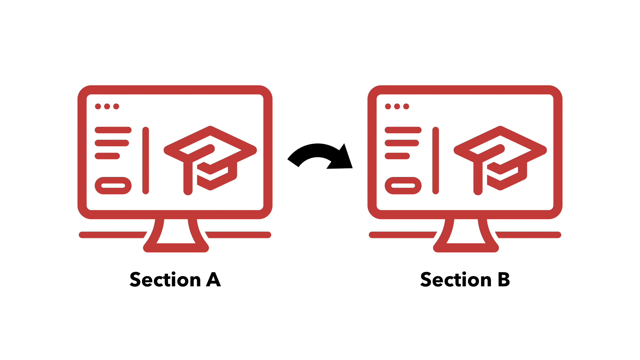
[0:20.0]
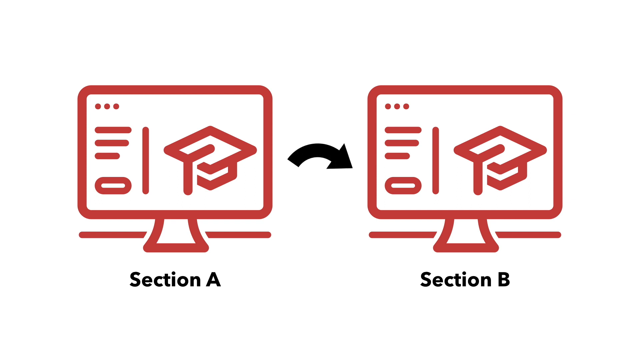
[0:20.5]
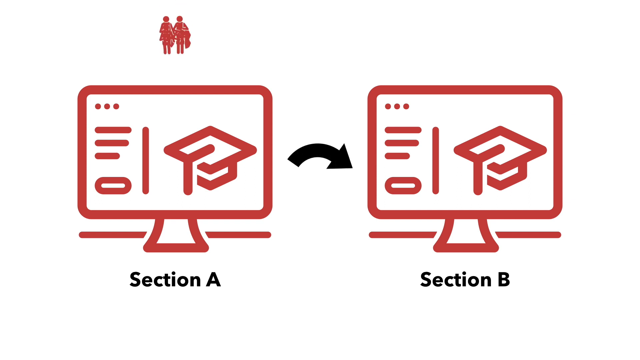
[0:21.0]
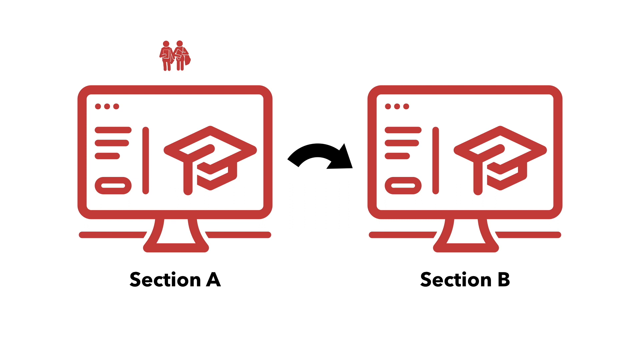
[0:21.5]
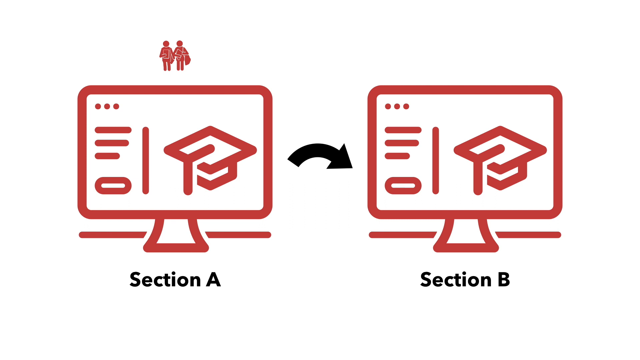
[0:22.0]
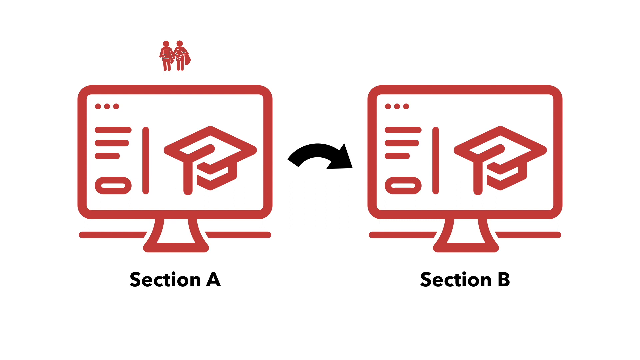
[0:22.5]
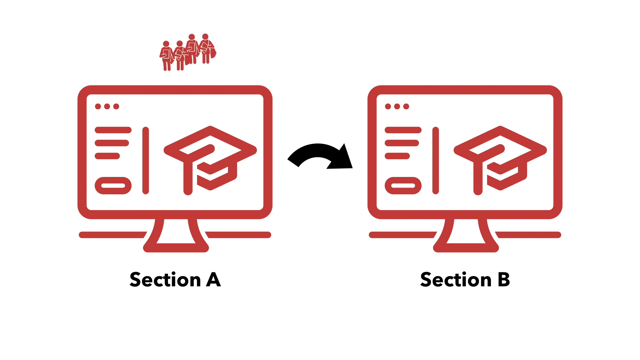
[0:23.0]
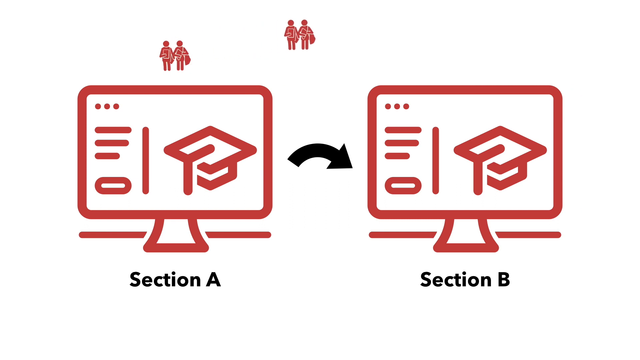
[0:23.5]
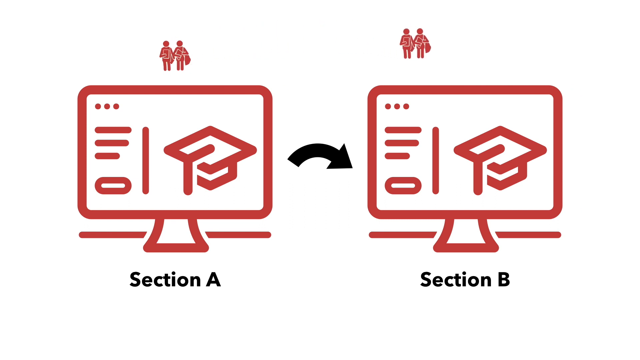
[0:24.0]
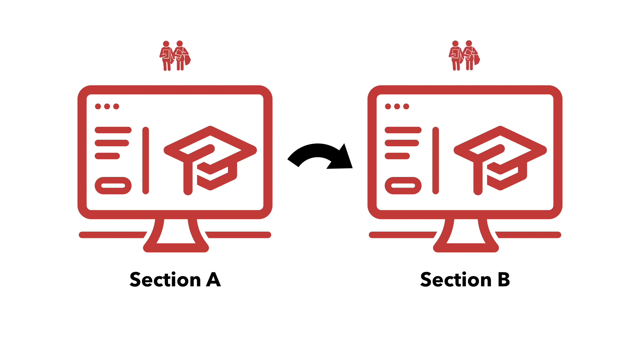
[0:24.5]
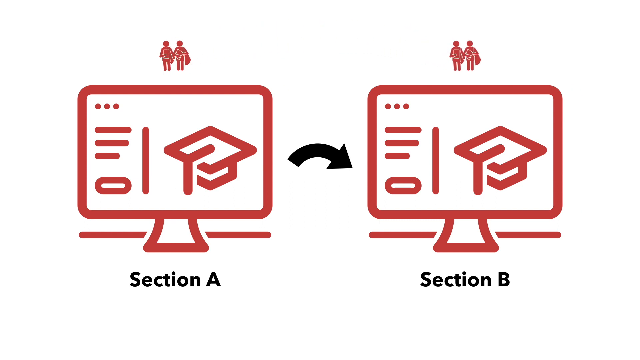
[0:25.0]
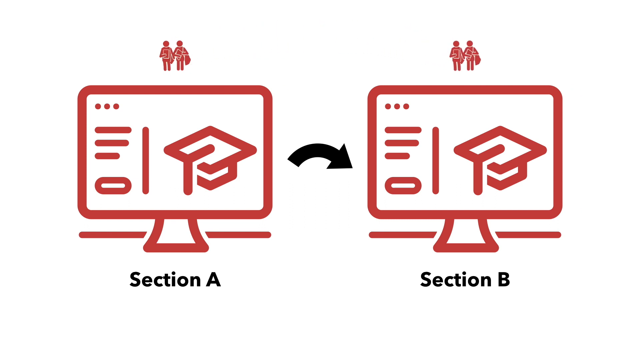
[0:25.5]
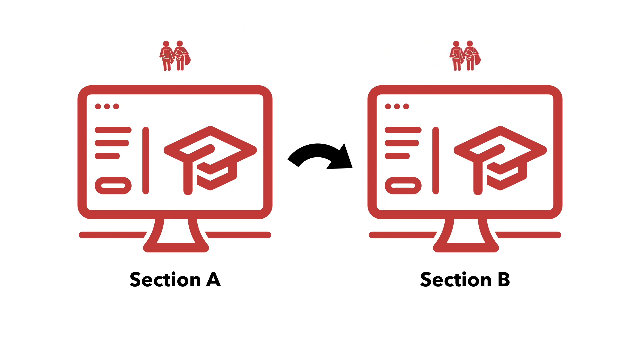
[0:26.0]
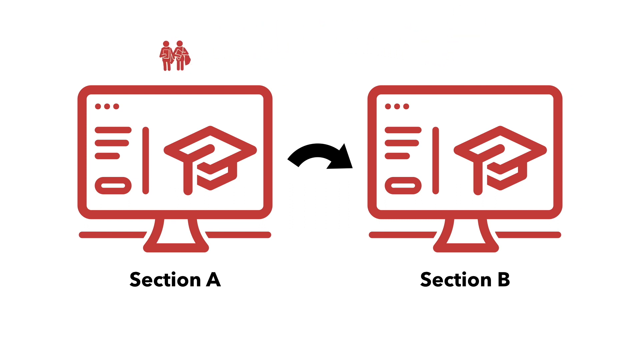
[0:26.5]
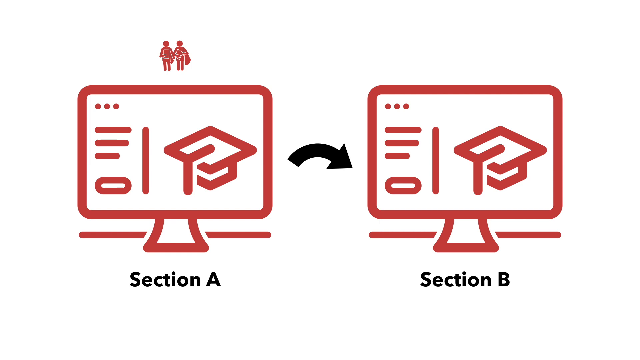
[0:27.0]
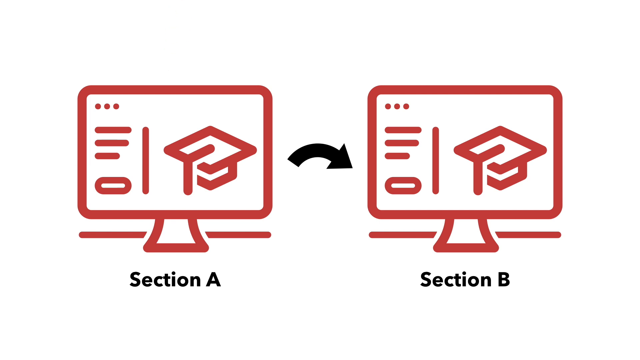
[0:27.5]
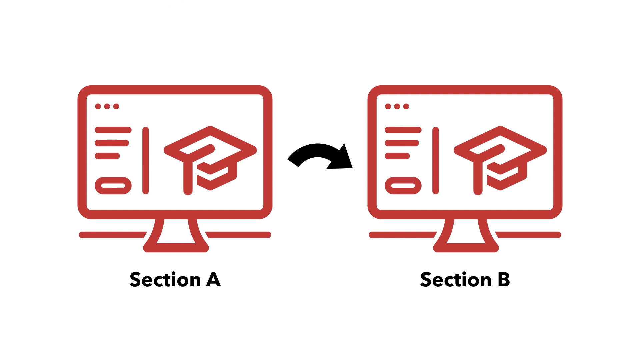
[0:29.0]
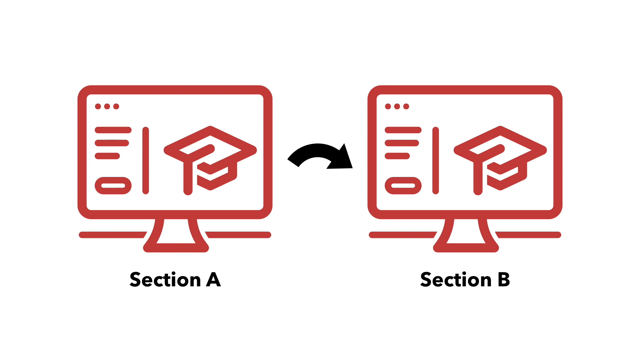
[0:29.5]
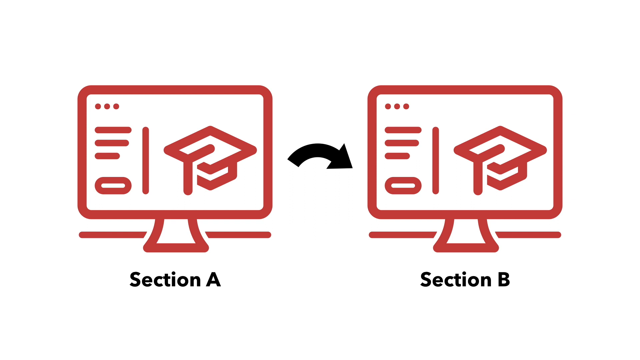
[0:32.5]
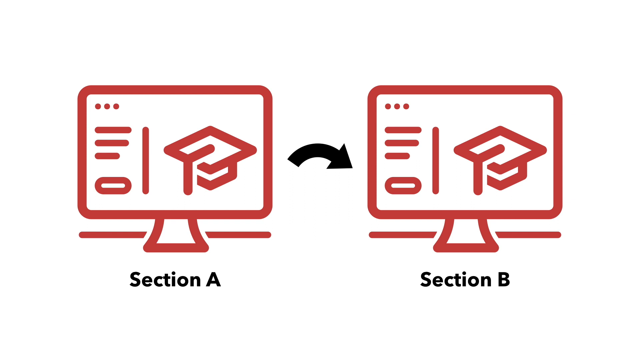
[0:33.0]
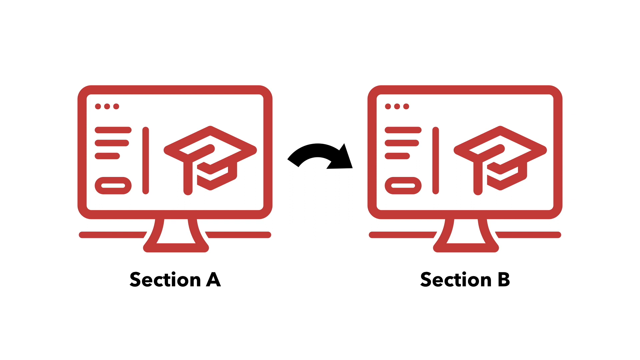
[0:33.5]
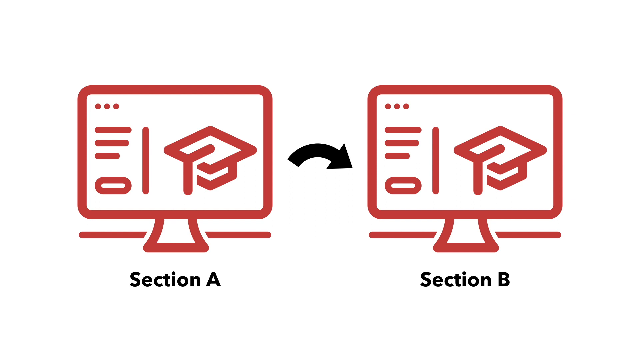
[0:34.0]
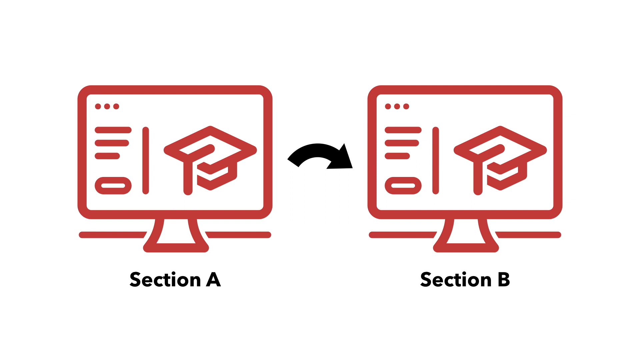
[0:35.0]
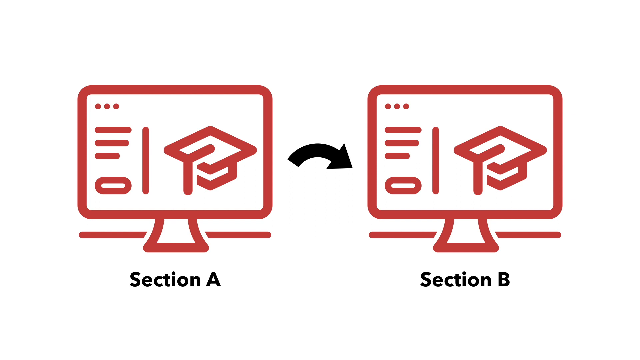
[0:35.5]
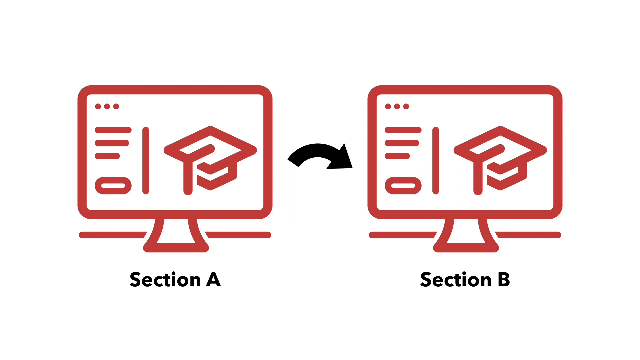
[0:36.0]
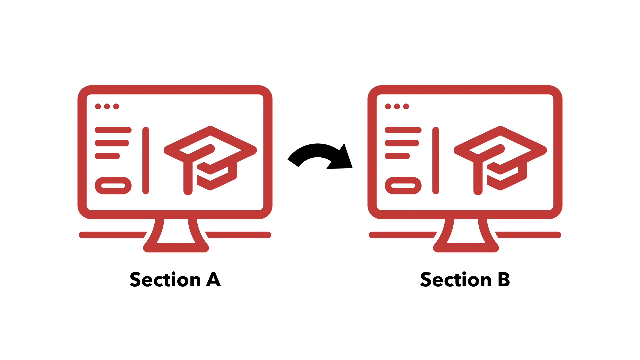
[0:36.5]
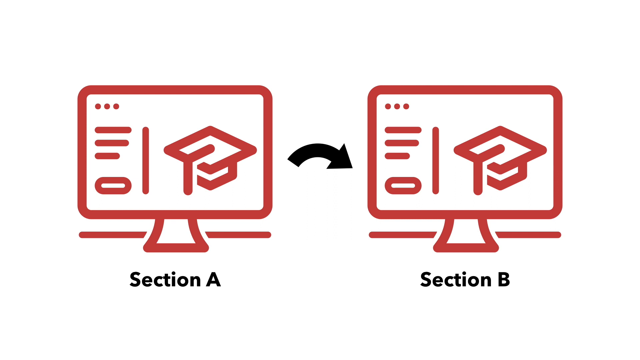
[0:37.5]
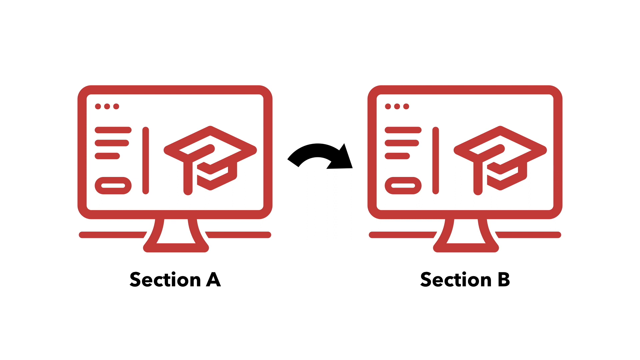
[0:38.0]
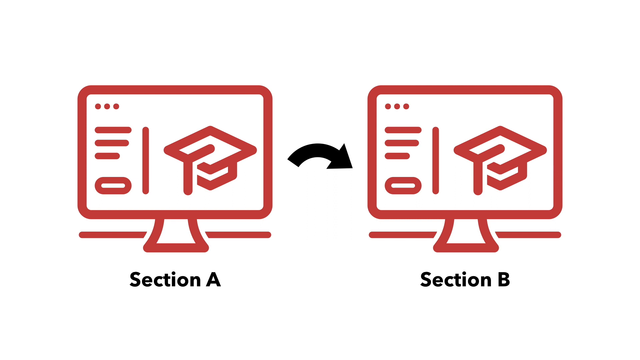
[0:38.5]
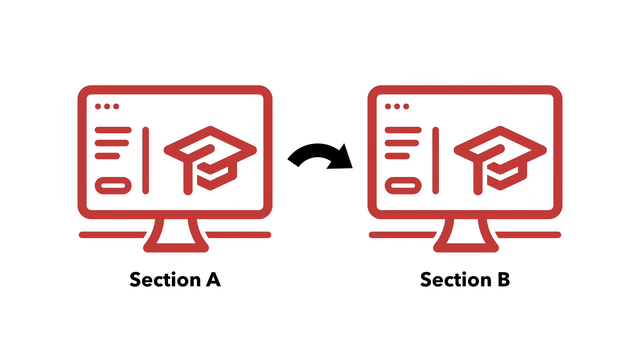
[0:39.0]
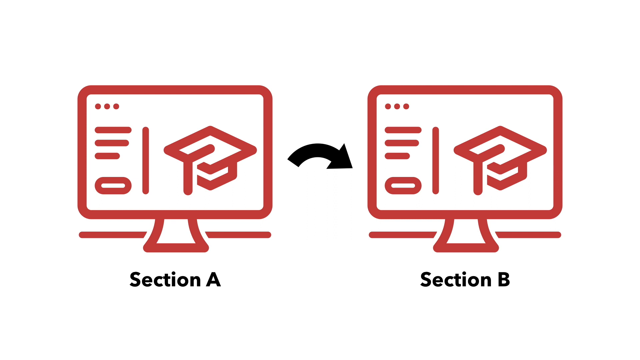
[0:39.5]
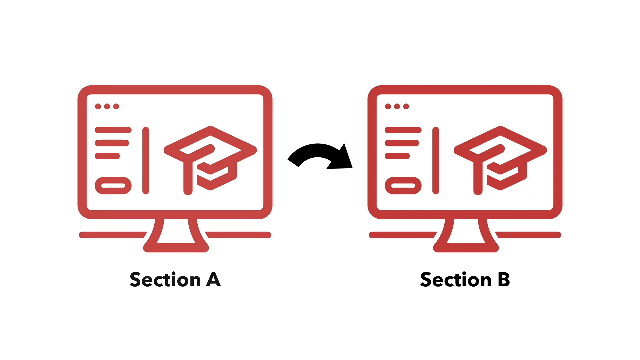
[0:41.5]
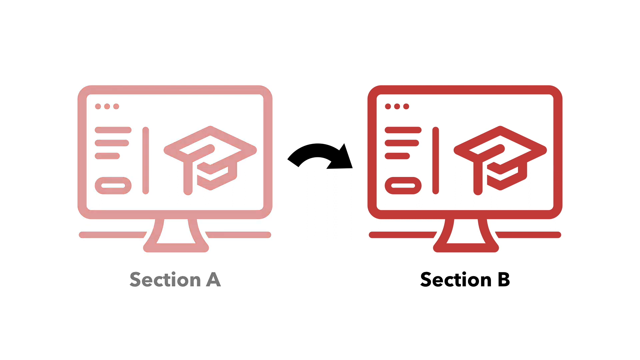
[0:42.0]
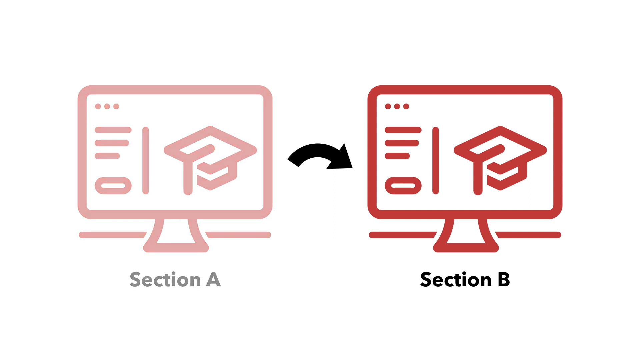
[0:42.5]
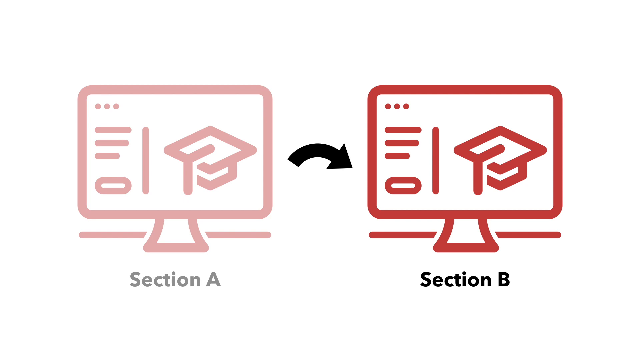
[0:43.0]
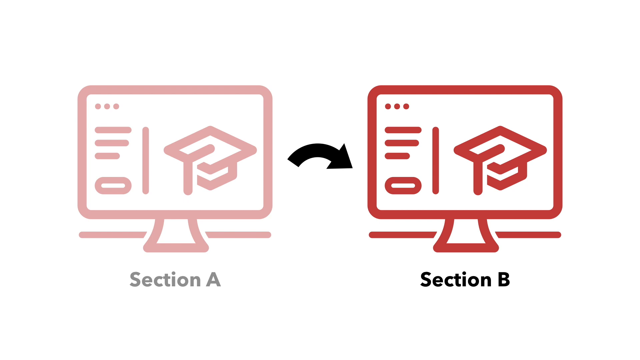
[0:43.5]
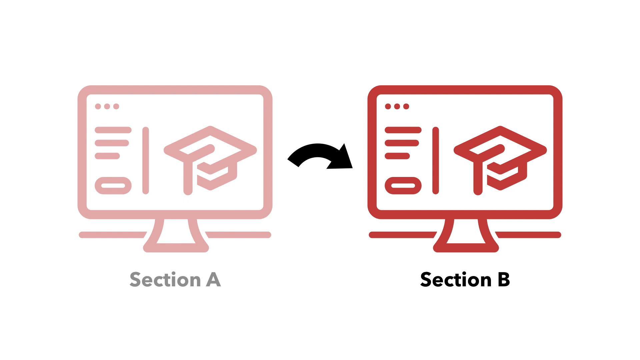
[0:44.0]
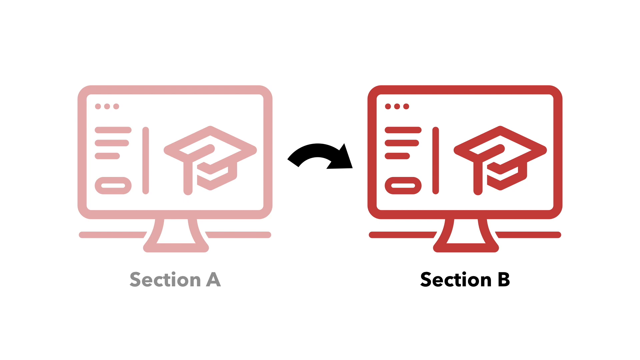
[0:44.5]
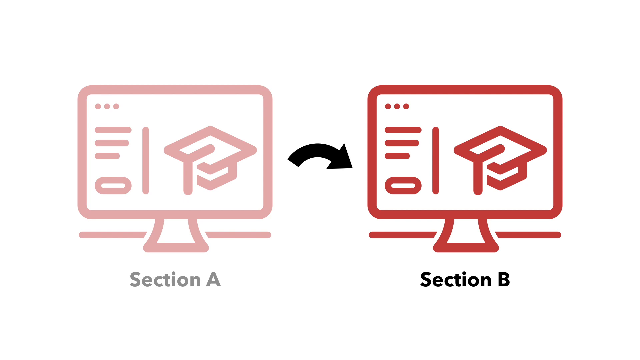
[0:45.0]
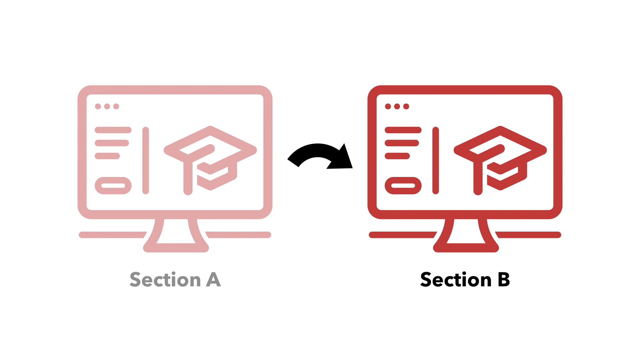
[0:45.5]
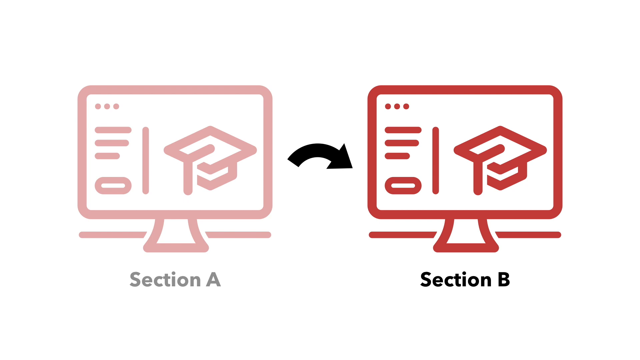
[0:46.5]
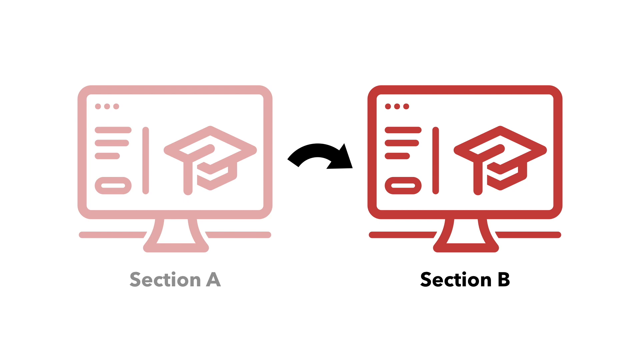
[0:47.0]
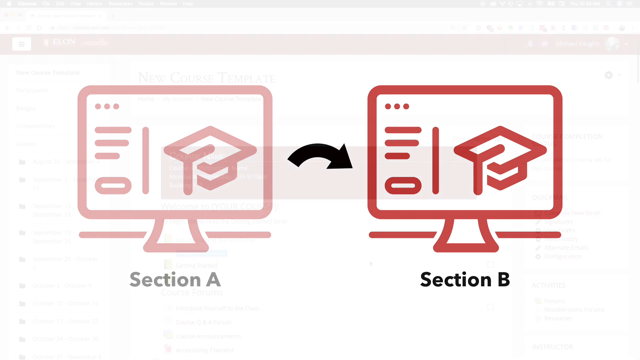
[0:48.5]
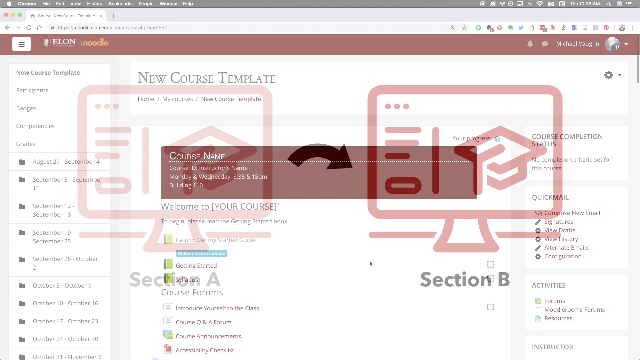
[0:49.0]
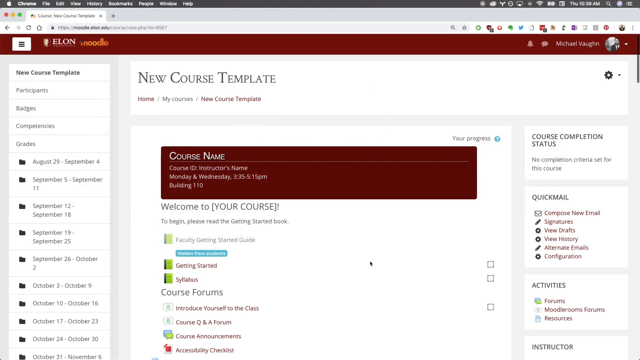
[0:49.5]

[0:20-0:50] A curved black arrow points left and right between section A and section B. A new icon of two people wearing backpacks and holding books appears on the top of the section A screen, and it is duplicated onto the top of the section B monitor. The section B logo quickly disappears, followed by the section A logo of the two people. The option A logo is slightly faded, as is the text on the left-hand side. Finally, the scene changes to a screenshot of a desktop with a Chrome browser showing the course. At the top it says "new course template", "course name" and "welcome to your course". There is a sidebar on the left-hand side and another on the right-hand side. The page has a red theme; it looks like it says "Elon" in the top left-hand corner, and in the top right it says "name Michael Vaughn".